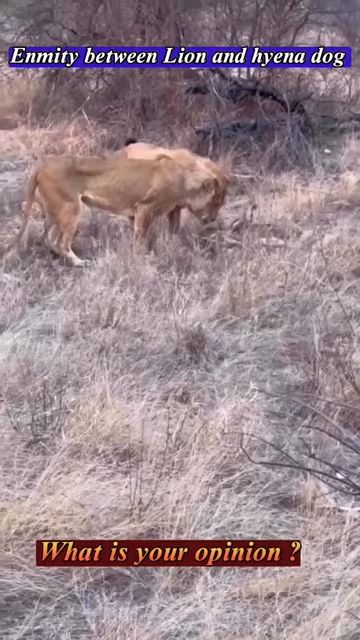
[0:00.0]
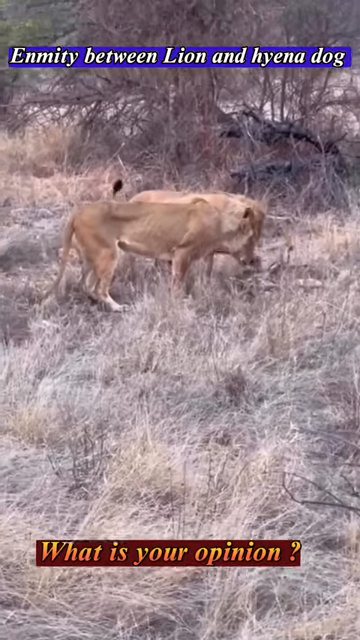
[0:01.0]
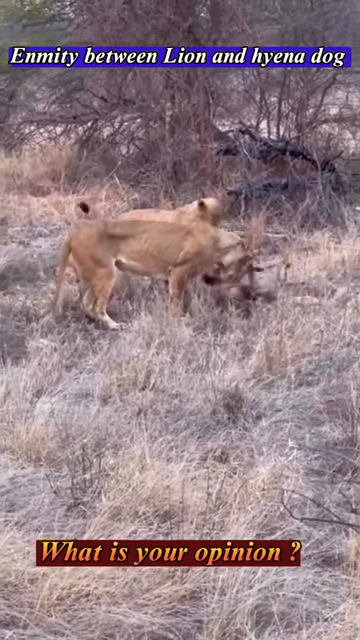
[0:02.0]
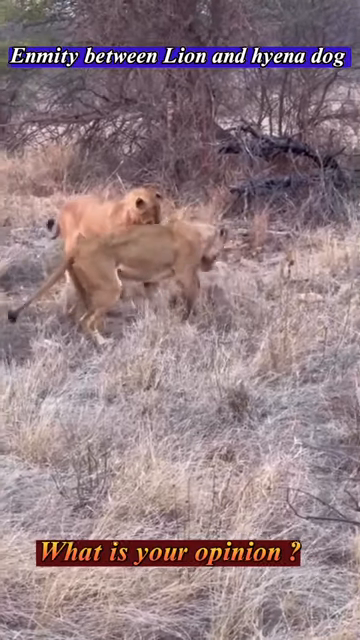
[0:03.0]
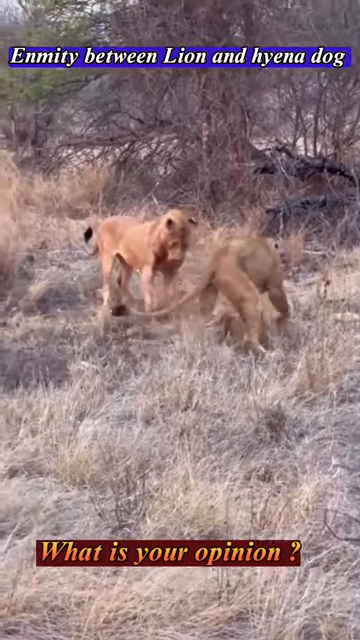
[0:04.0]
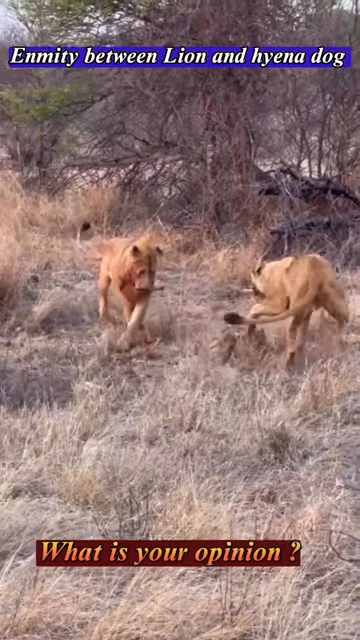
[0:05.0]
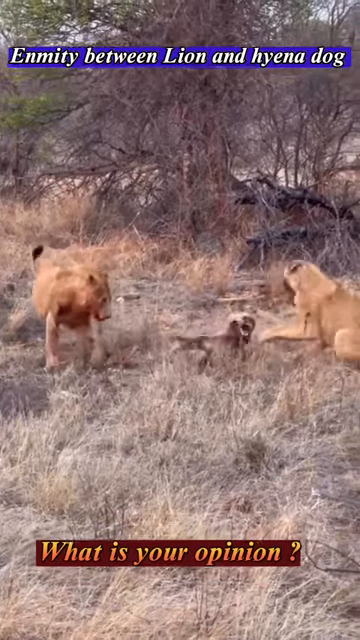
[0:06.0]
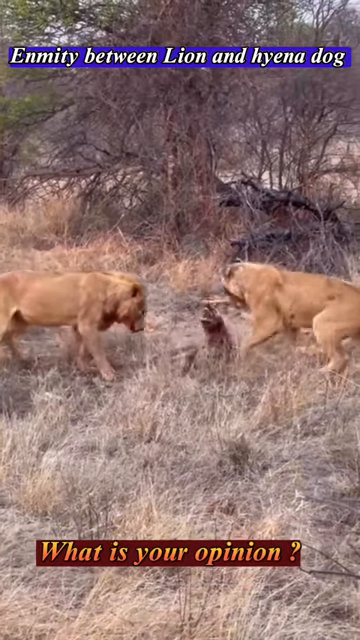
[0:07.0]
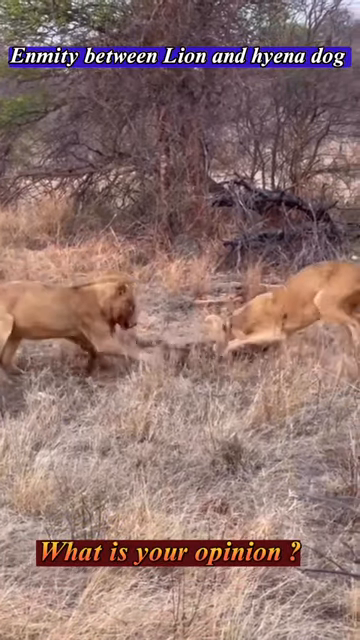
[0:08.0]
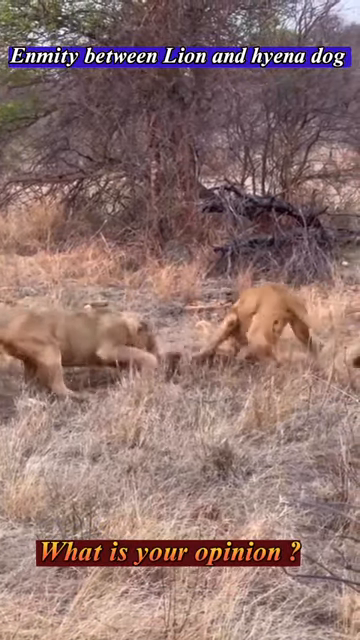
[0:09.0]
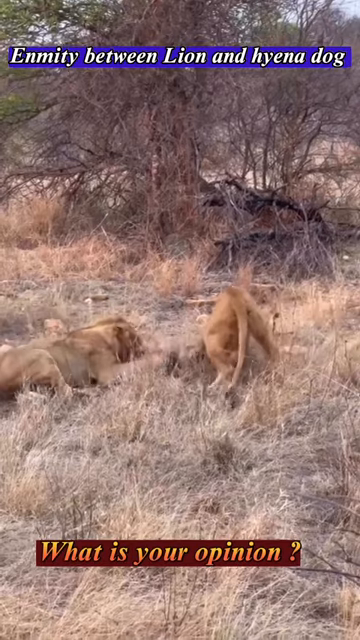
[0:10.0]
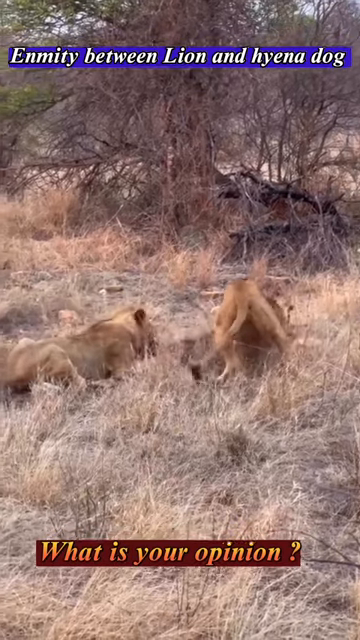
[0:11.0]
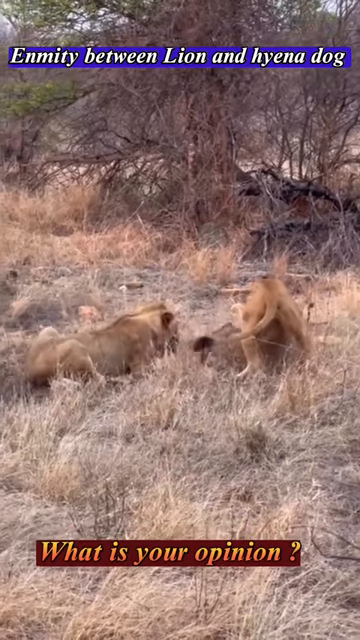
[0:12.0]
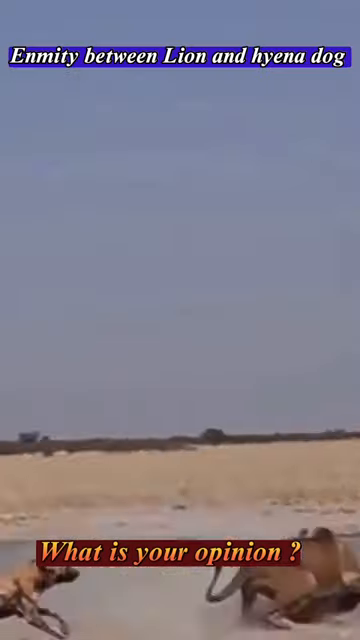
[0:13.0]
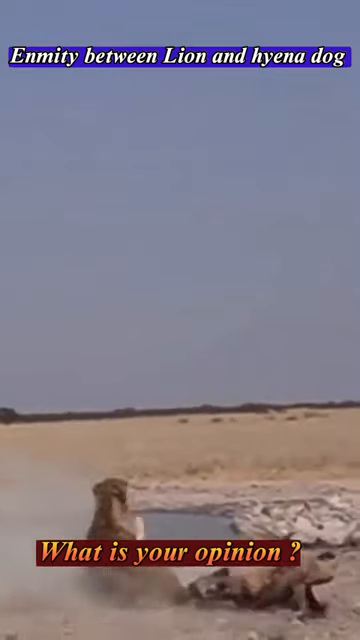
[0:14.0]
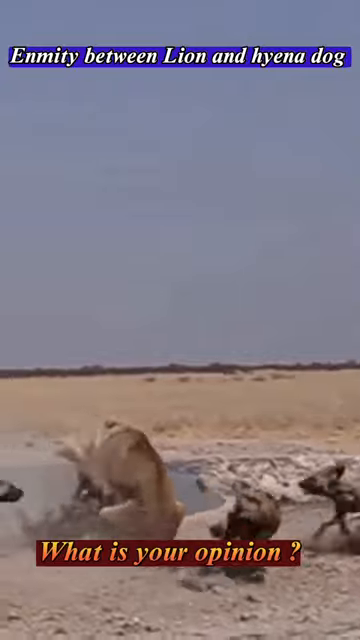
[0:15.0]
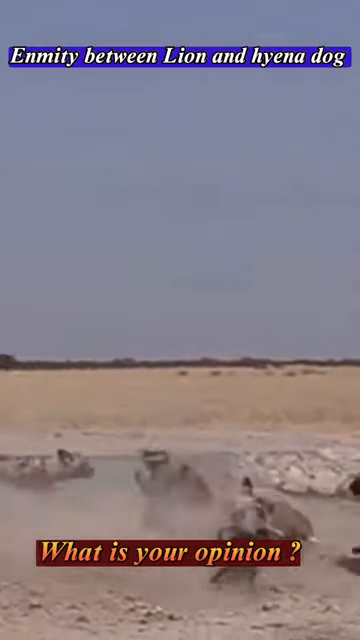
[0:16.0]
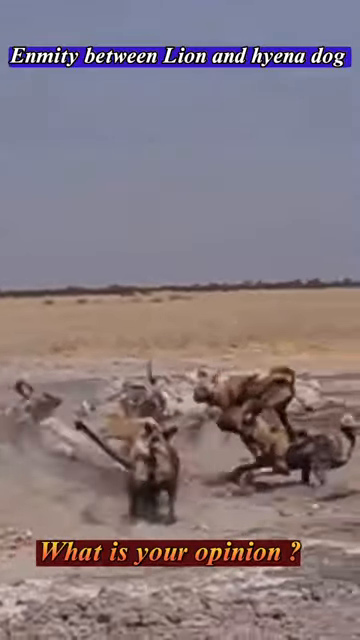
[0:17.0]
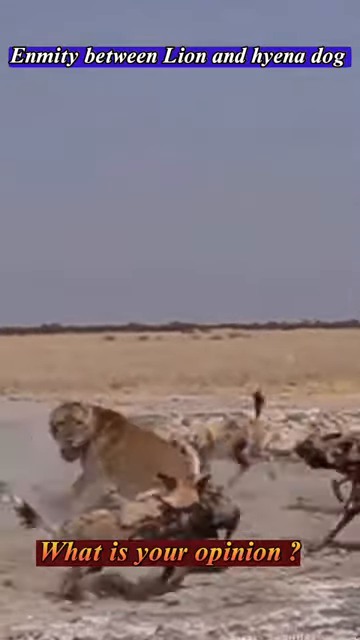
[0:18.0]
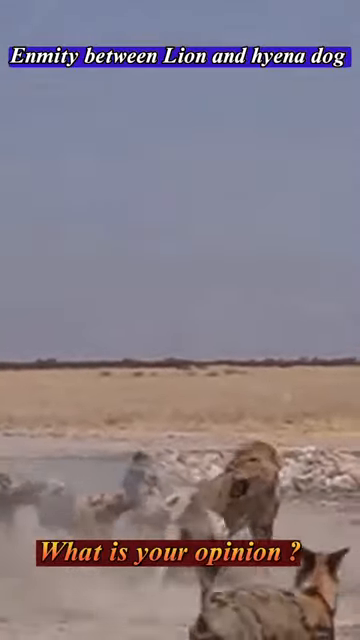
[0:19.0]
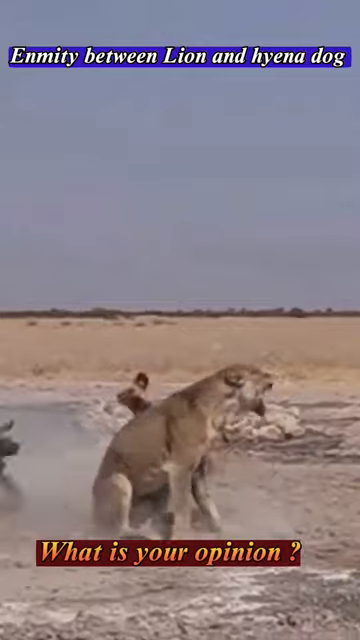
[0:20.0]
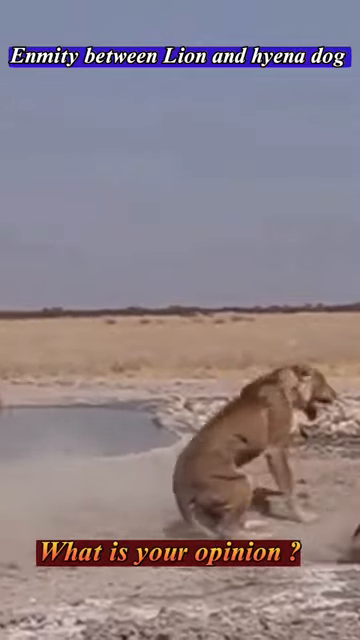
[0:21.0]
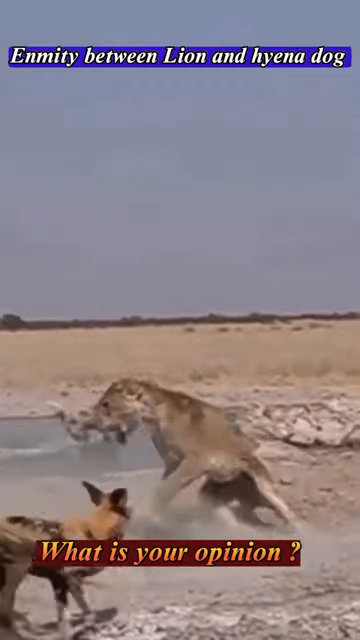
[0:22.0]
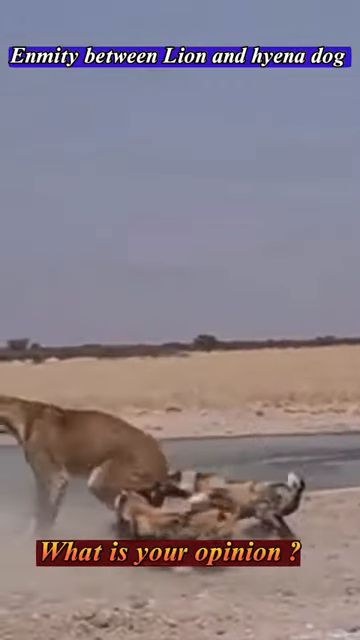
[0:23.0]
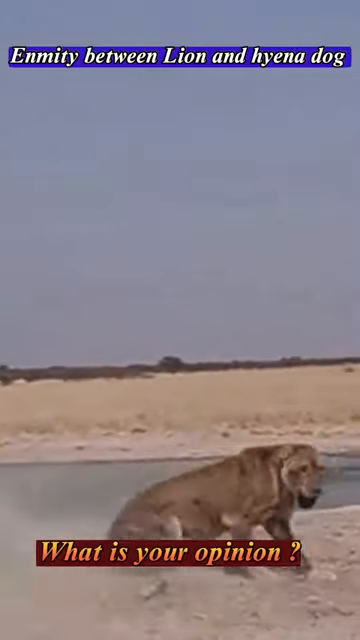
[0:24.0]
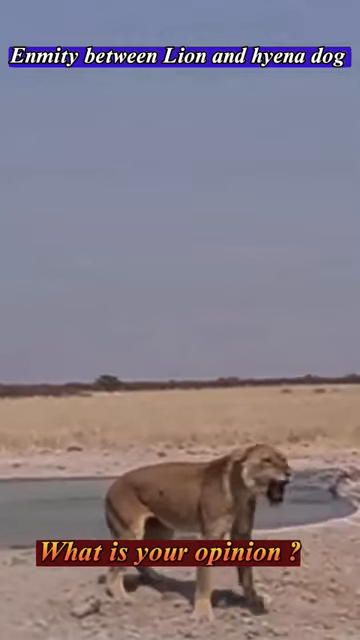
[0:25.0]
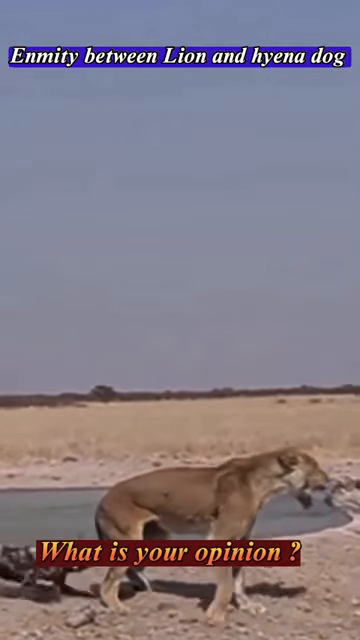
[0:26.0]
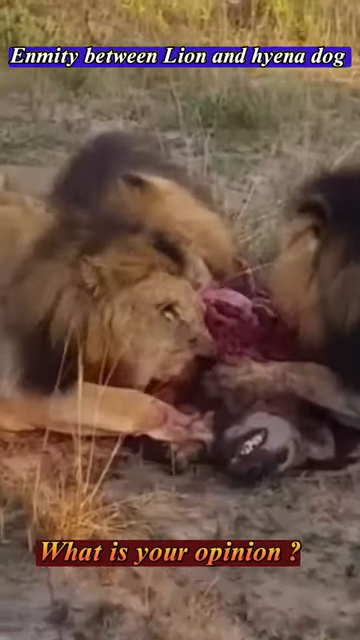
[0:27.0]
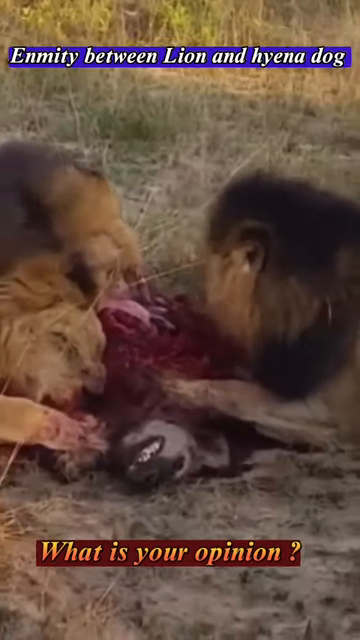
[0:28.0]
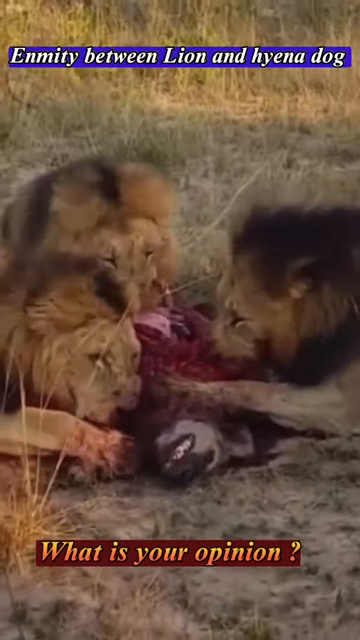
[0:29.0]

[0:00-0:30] A video of a lion and a hyena dog opens the sequence, with a caption on top that reads "enmity between lion and hyena dog. What is your opinion?" The animals are in a dry grassy field with desert-like plants behind them. The lion and the hyena both appear to be attacking another animal to eat, which looks like it may be some other type of desert animal, though it is hard to see in the struggle. The lion and the hyena tag-team the animal together, one at the front and one at the back. The next video shows a lion and a hyena attacking a pack of animals; the lion looks very ferocious and loud. Another video follows in which a lion has killed a hyena. The hyena is bloody and seems dead, and the lions are actively eating it.